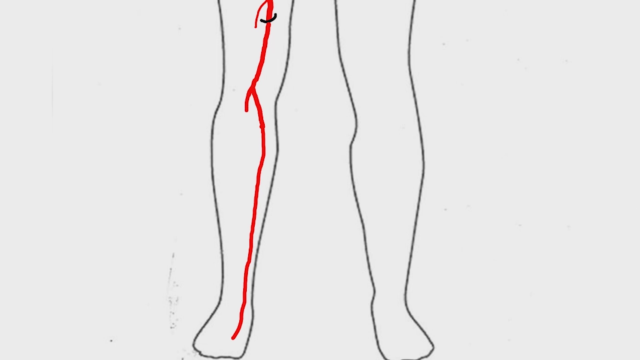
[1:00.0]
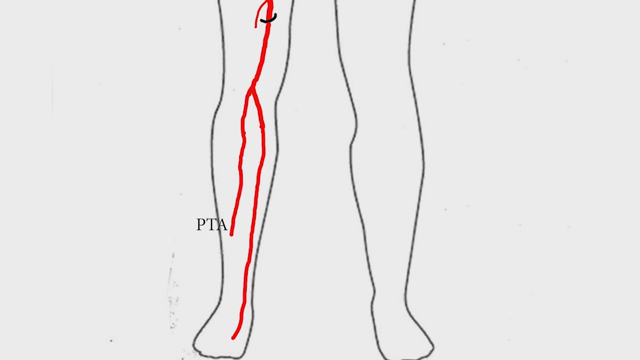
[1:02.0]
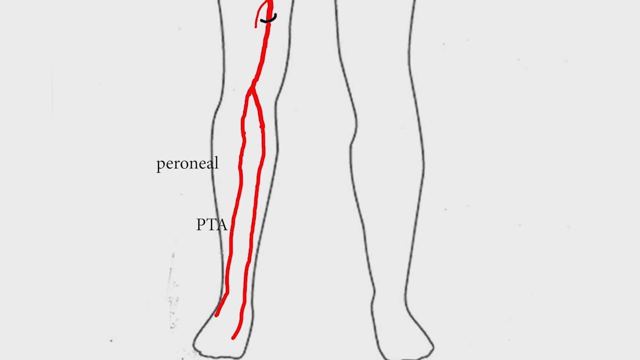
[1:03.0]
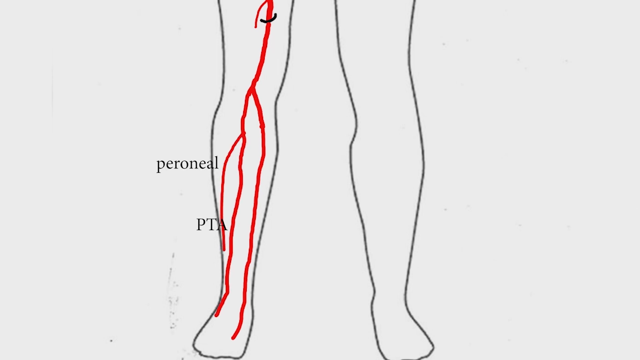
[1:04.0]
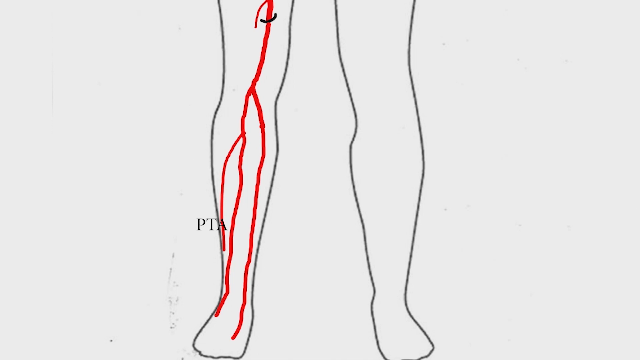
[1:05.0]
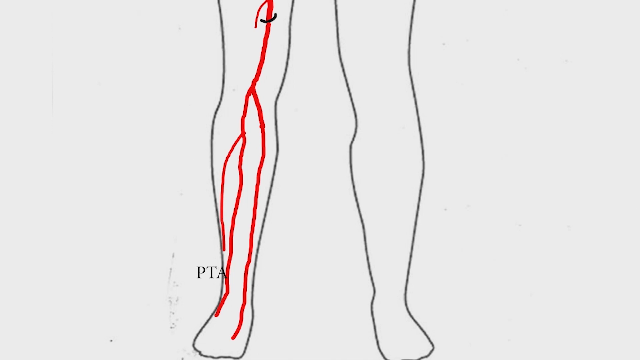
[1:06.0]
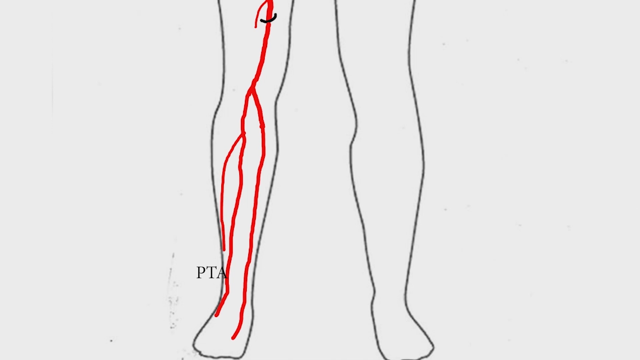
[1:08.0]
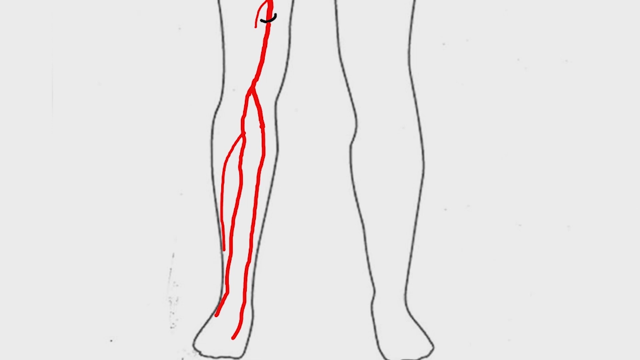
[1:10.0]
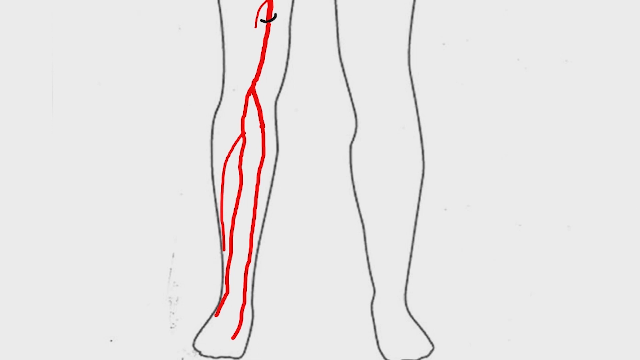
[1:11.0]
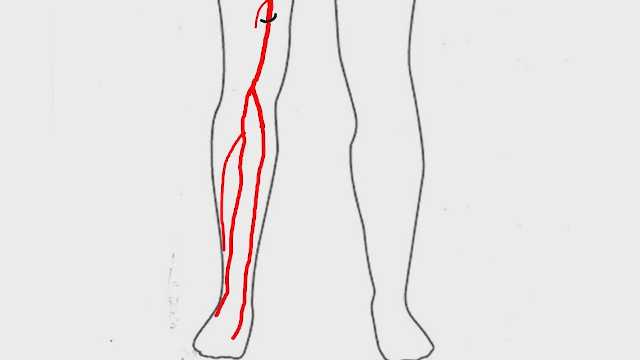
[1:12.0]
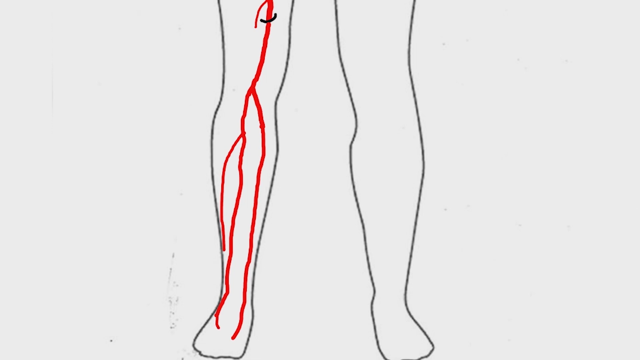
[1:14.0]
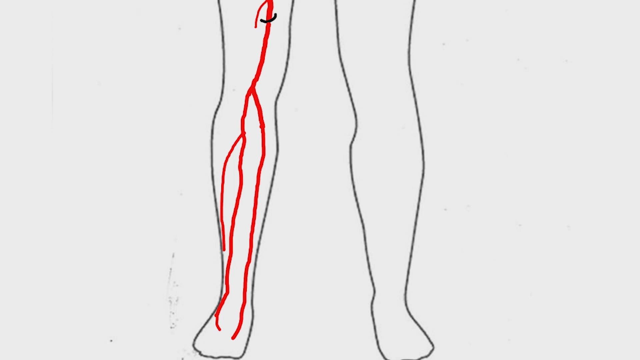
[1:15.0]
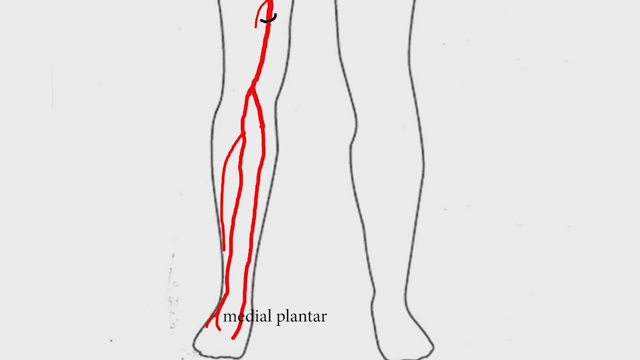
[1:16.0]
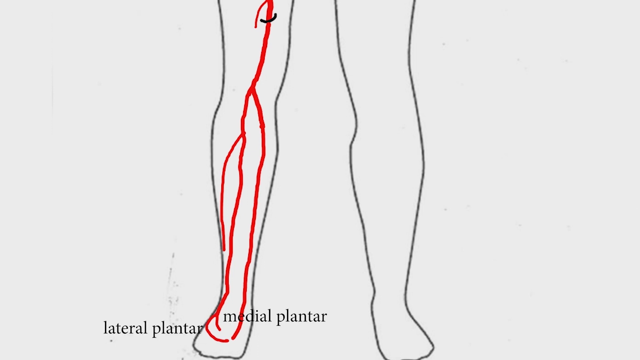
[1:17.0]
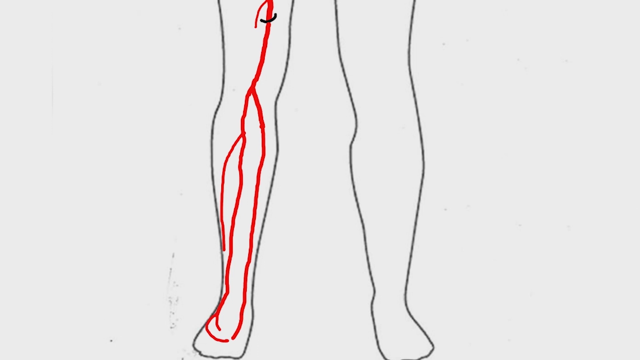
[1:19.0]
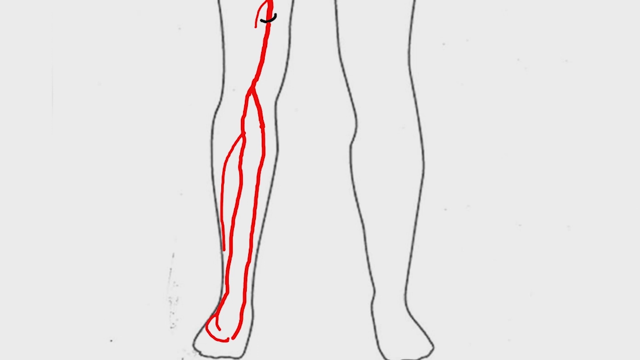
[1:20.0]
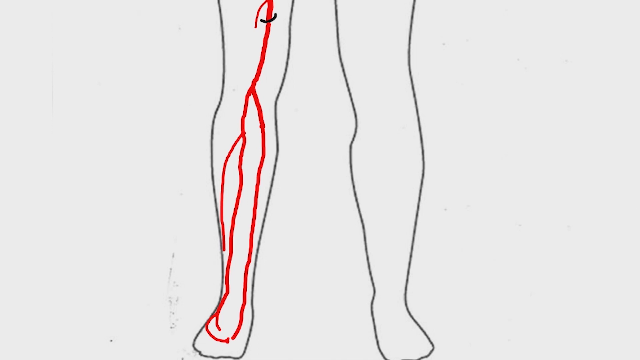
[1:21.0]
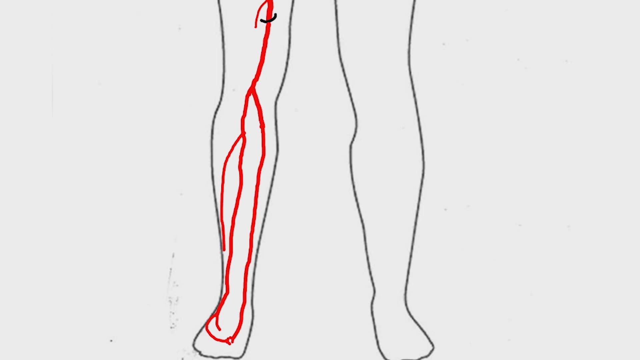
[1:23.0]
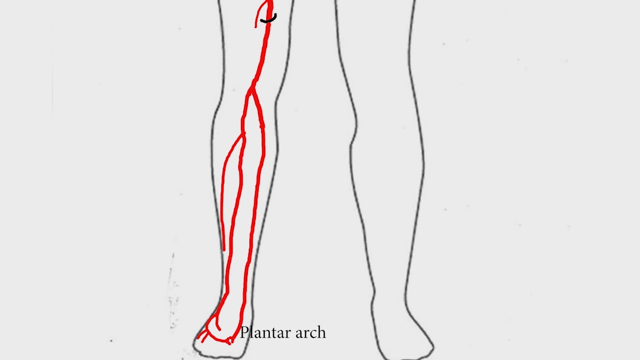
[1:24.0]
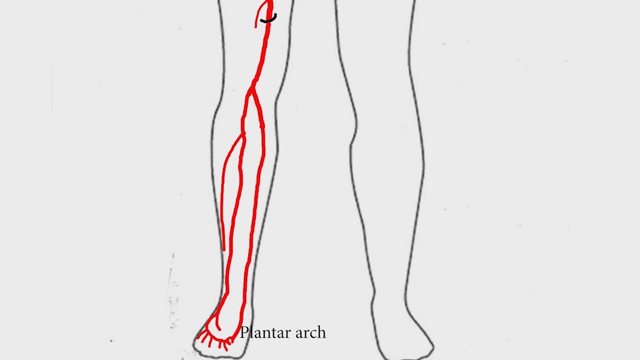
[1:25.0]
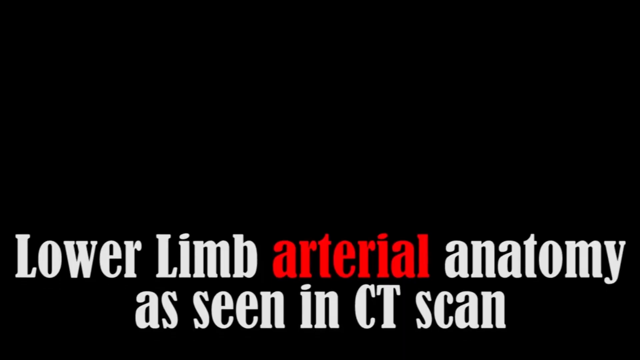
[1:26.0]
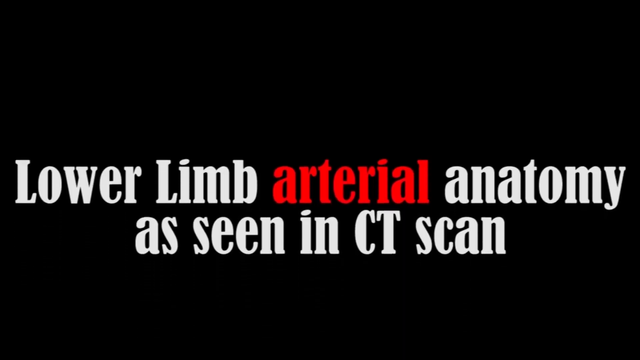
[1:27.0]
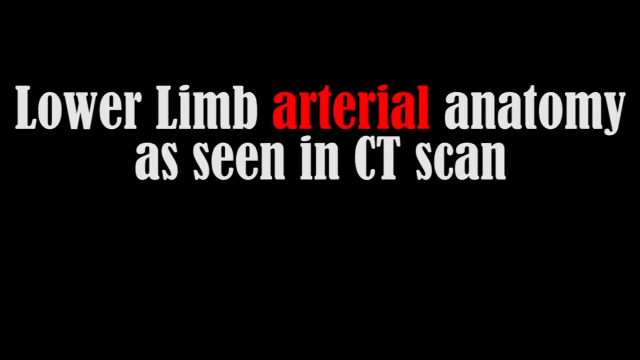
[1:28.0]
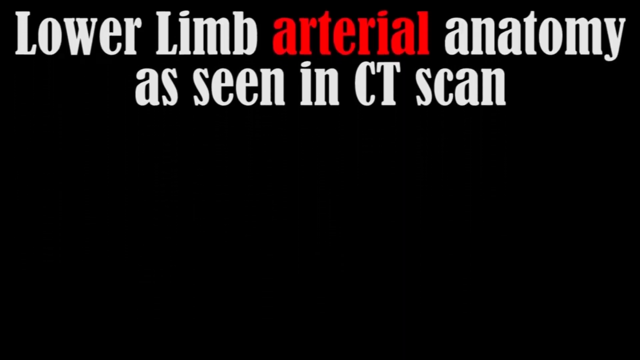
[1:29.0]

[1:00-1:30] A very simple sketch drawing of a person's leg is on a plain white background, showing the lower part of the legs. On one of the legs, on the left side of the screen, a long red line extends all the way to the foot, seemingly indicating an artery or vein. A second artery extends out from it and makes its way down to the foot as words pop up on the screen: first "peroneal", and right below that the letters "PTA". A third line then extends down toward the foot. At the bottom of the screen, down by the foot on the diagram, the words "medial planter" and "lateral planter" appear, followed by "planter arch". At the very end, the video cuts to a black screen where the words "lower limb arterial anatomy, as seen in CT scan" are written in white letters, with the word "arterial" in red, and the words move from the bottom of the screen to the top.